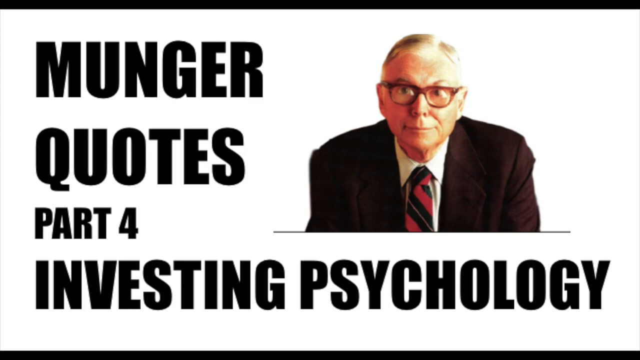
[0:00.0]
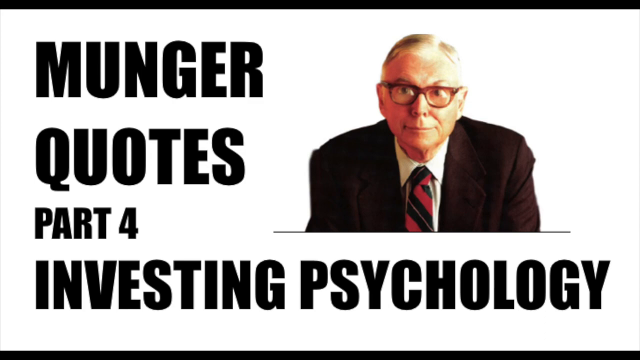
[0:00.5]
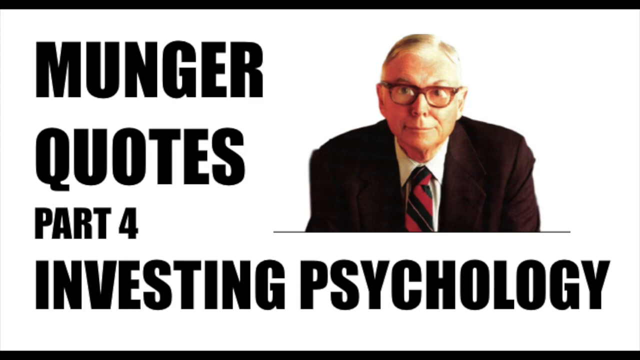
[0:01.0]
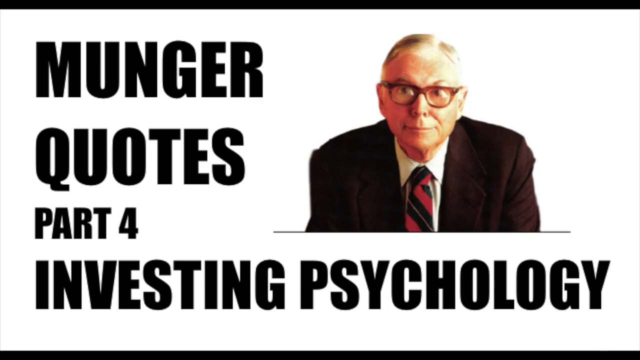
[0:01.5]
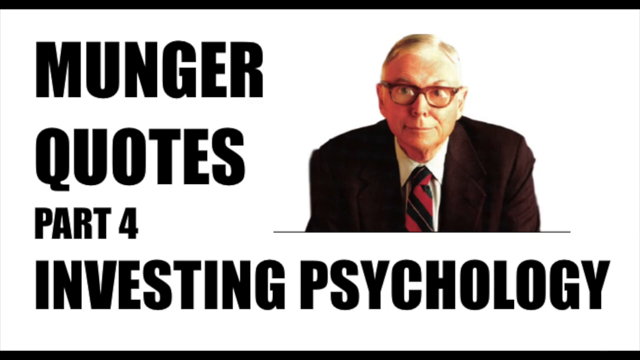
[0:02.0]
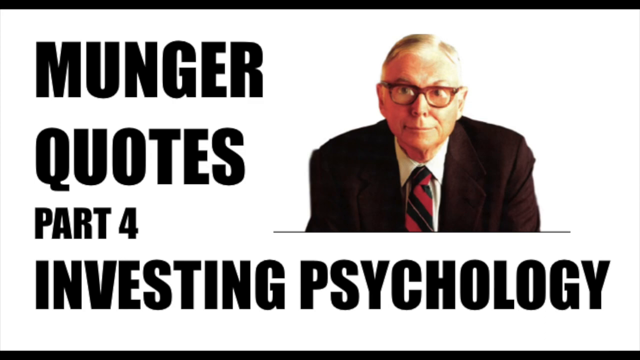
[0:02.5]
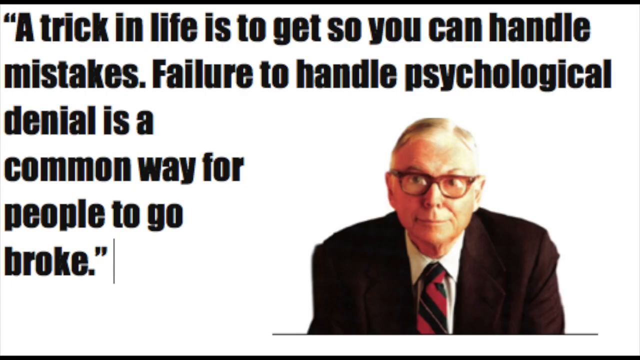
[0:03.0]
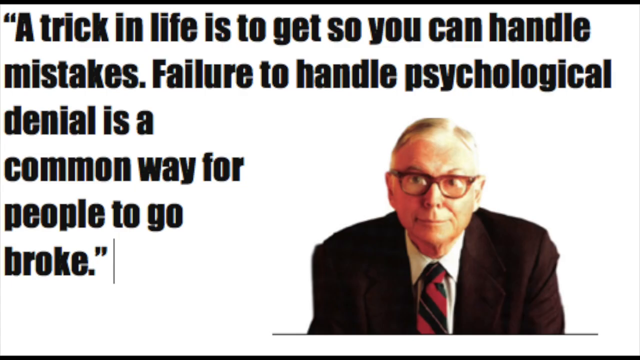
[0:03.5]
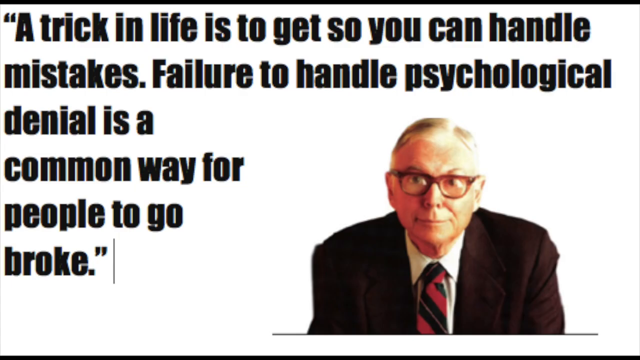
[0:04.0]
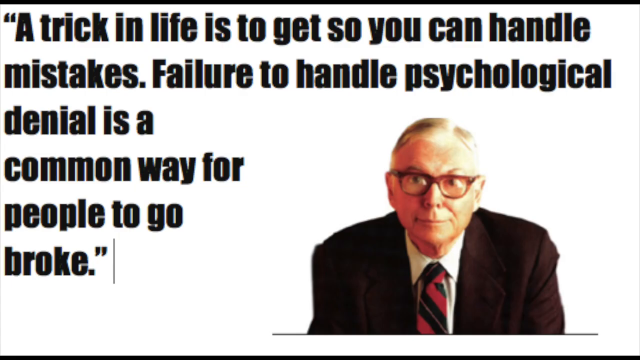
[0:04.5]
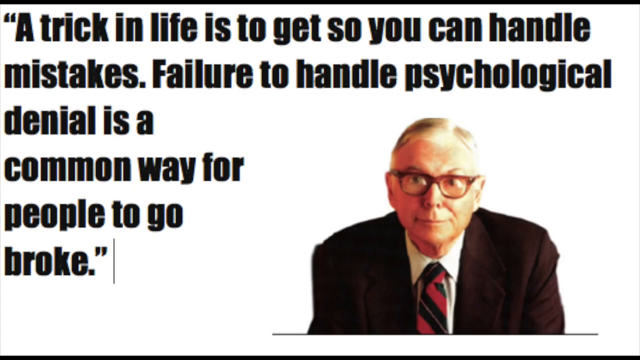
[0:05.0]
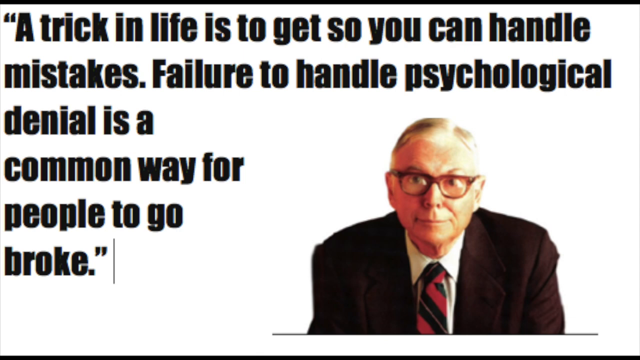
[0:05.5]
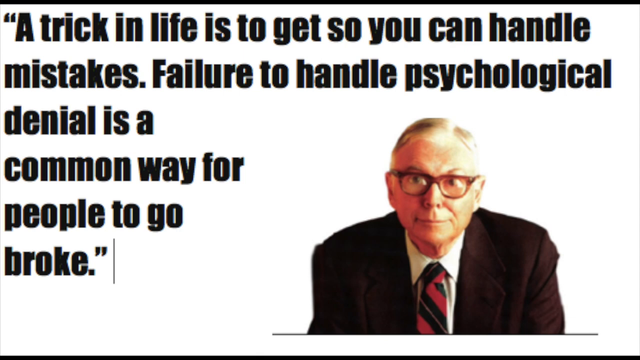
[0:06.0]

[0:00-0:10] Against a white background, a man appears on the right side of the frame, the top of his head just a little down from the top and his lower body just past the center; the frame cuts him off at about his chest and biceps. He wears a brown sports coat, a white shirt and a red and black tie, and he is clean shaven. He leans forward with a pursed mouth and raised eyebrows and appears to be about 65. He wears red glasses, and his hair is combed out, parted just above his right eye, a little long on top and shaved on the side. Big blocky black letters read "Munger quotes, part 4, investigating psychology." The man then moves down toward the bottom on the right side, and a quote appears: "a trick in life is to get so you can handle mistakes, failure to handle psychological denial is a common way for people to go broke."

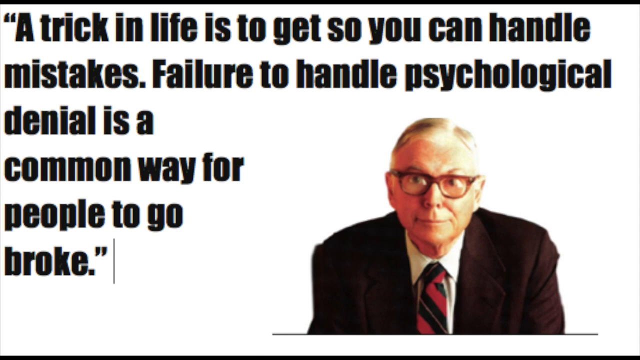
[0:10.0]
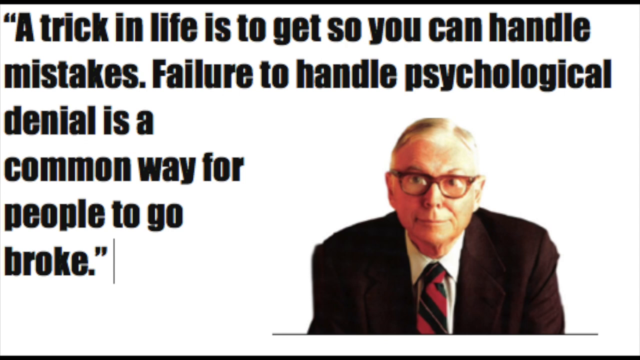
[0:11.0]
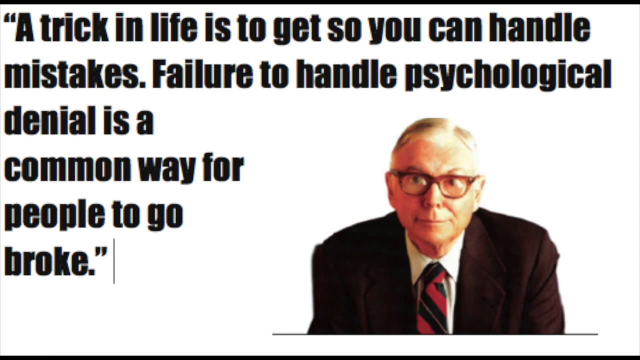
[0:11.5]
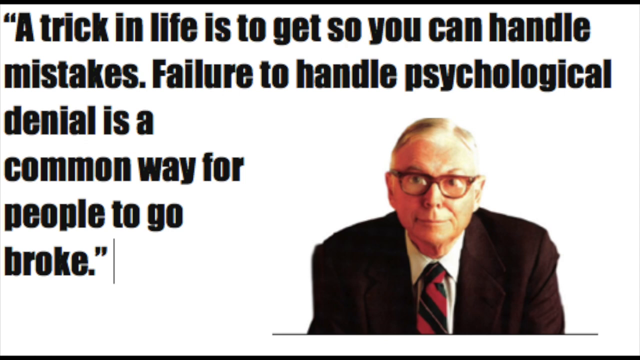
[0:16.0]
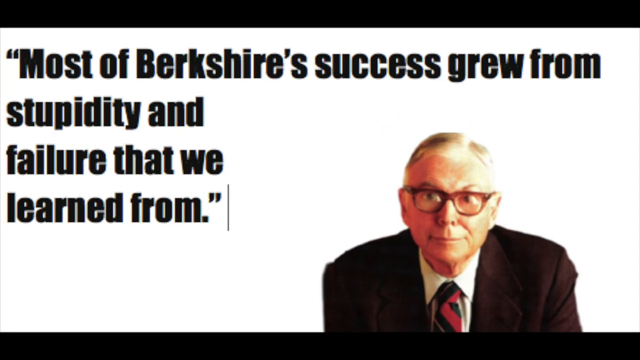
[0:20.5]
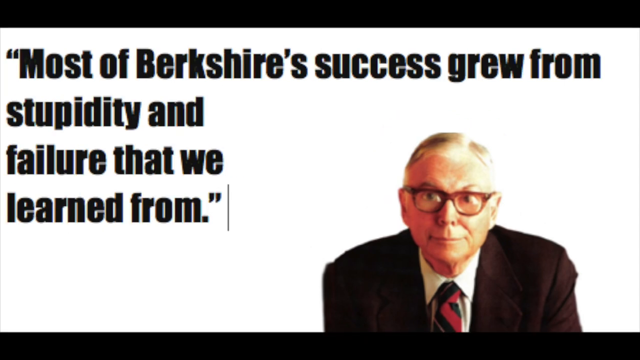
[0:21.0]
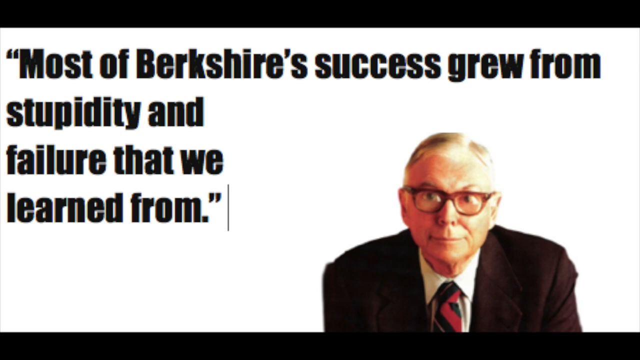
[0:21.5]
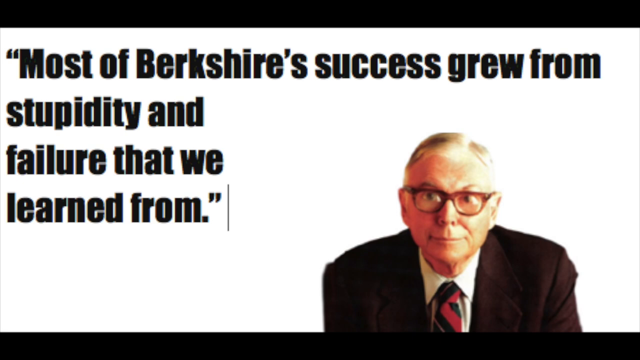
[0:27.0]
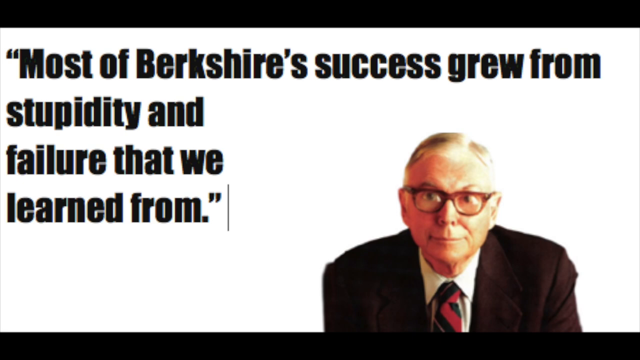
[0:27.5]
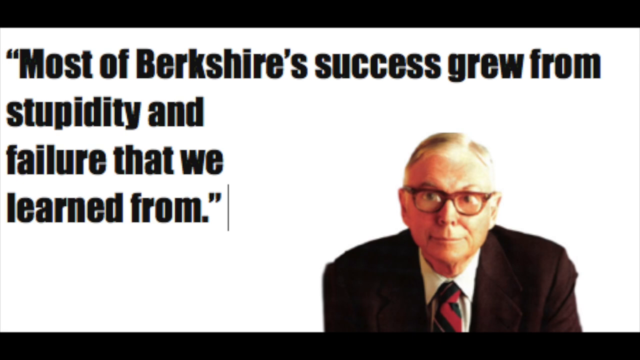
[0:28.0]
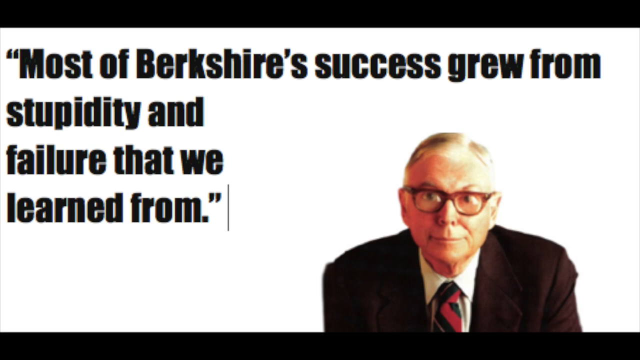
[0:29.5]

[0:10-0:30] On a white background, the man is in the bottom right, taking up about the bottom quarter of the frame. Bold black text runs across the top in lines: "a trick in life is to get so you can handle," then "mistakes, failure to handle psychology," then a line about denial being a common way for people to go broke, all inside quotation marks. The video moves to the next portion, and the man shifts over just a little. His hair is somewhat grayish with a little brown on the left side of the top, parted above his left eye toward the center, so more of it goes to the left than the right. The sides of his head are clean shaven, as are his chin and upper lip. He appears to be about 65, and his eyebrows come up a little over his red glasses. Bold black lettering runs across the top and then down the side in four lines: "Most of Berkshire's success grew from stupidity and failure that we learned from."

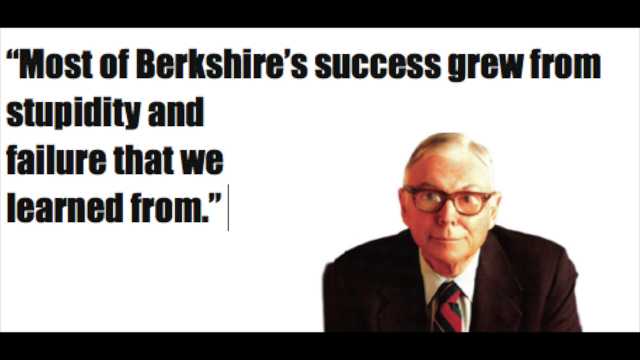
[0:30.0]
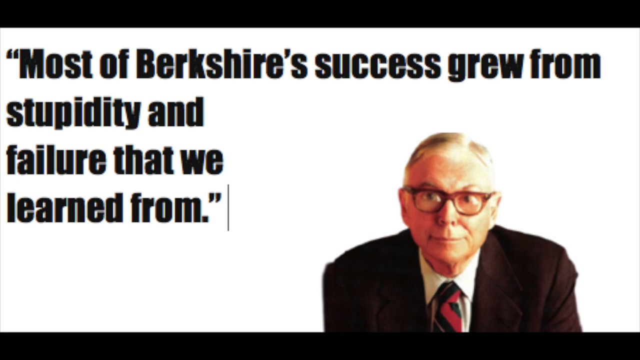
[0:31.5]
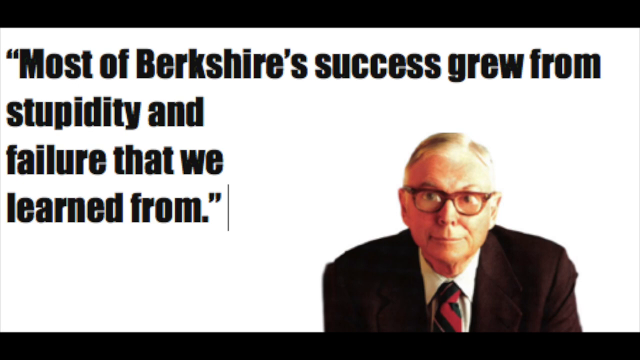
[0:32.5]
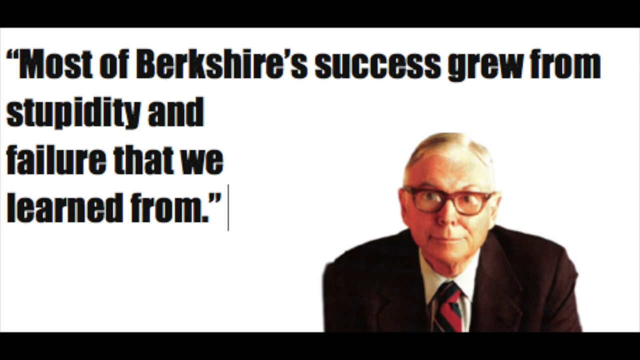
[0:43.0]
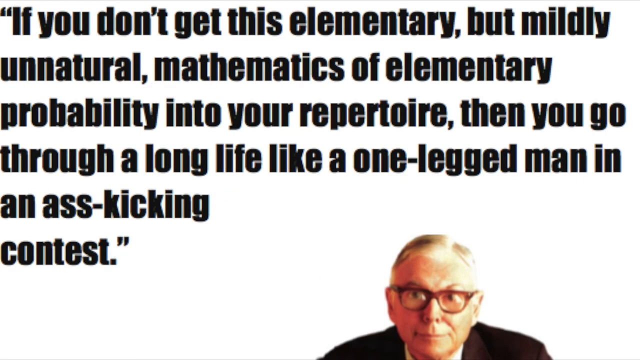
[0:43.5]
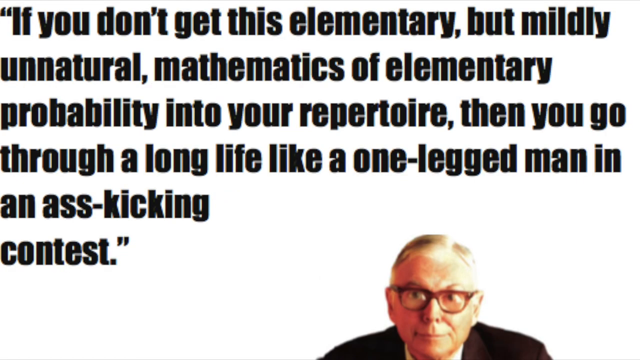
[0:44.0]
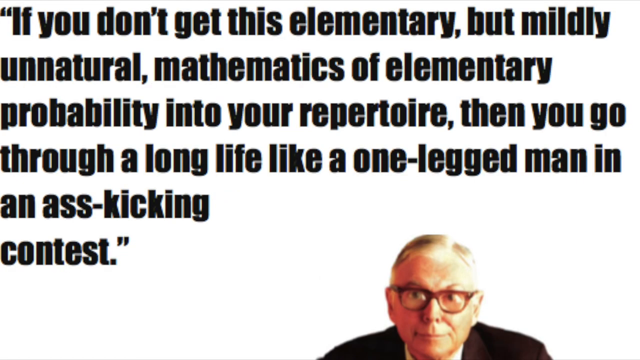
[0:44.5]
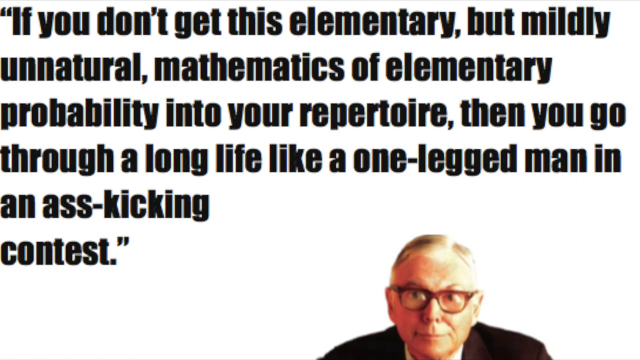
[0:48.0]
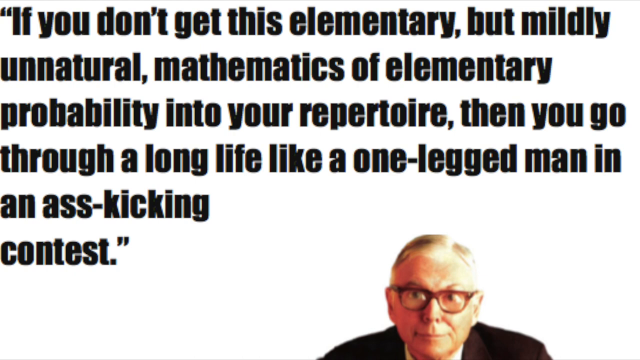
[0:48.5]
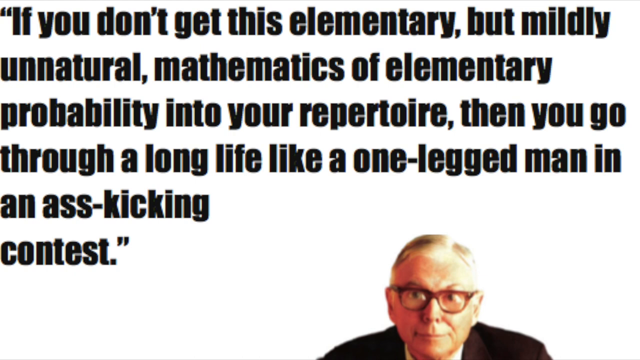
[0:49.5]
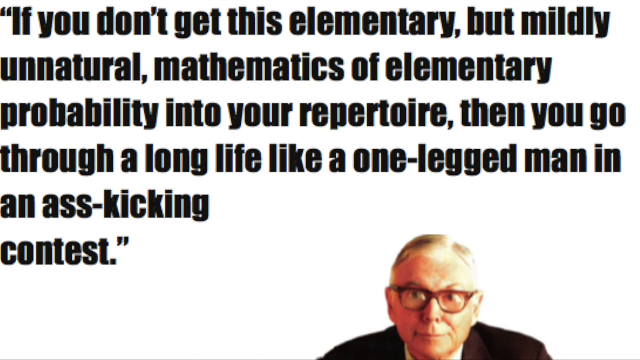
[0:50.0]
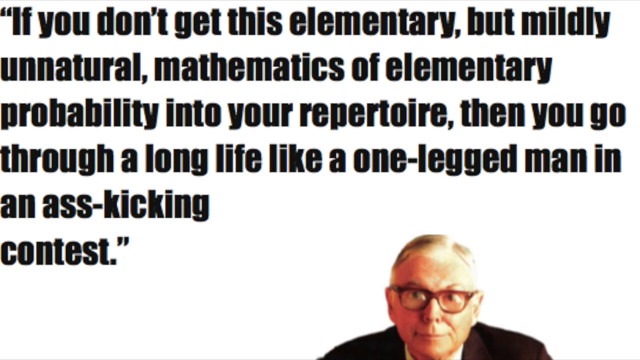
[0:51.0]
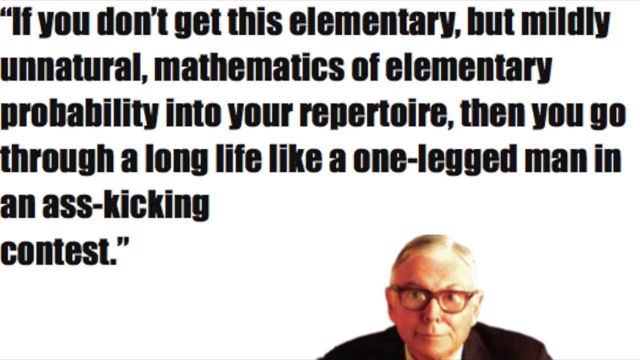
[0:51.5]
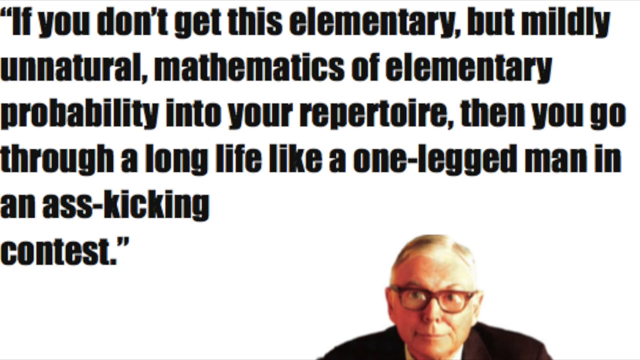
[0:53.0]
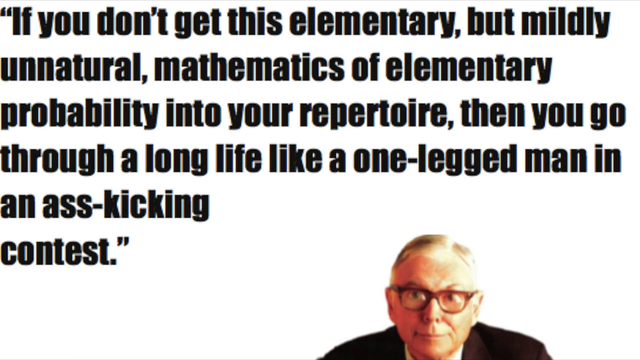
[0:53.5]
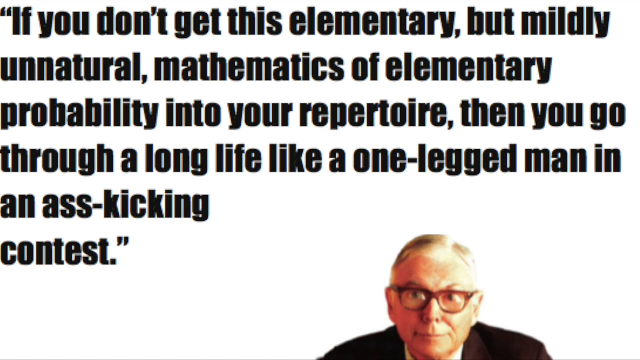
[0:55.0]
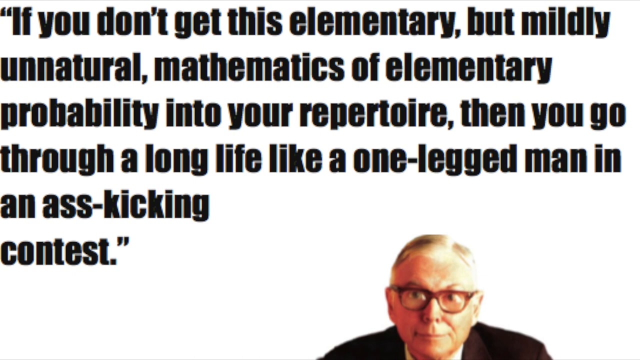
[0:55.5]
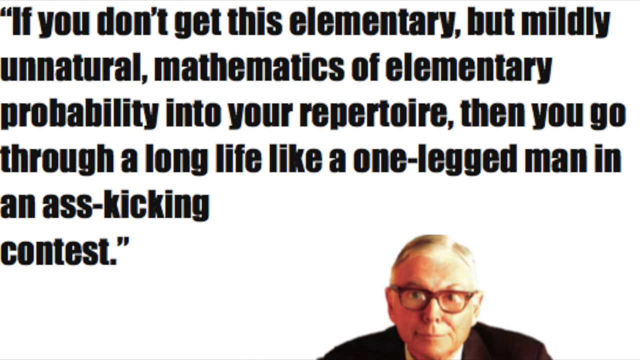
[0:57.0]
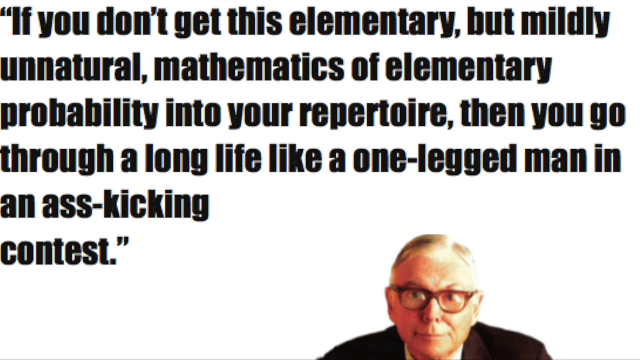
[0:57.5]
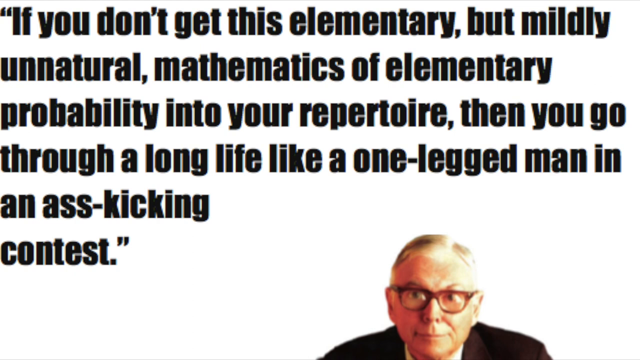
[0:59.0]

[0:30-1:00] The white background and the same quote remain, with the man in the bottom right corner. The big, bold, blocky black letters form one long line across the top and three smaller lines beneath it, reading "Most of Berkshire success grew from stupidity and failure that we learned from," with quotation marks around it. The video cuts to the next part, and now the man's chin is at the bottom of the image: only his chin up is visible, plus a little of where his traps would be. None of his white shirt or tie shows, just a little of his brown coat. Four long lines of big, bold, blocky lettering run all the way across from left to right, followed by a line with three words and a line with one word: "If you don't get this elementary but mildly unnatural mathematics of elementary probability into your repertoire, then you go through a long life like a one-legged man in an ass-kicking contest."